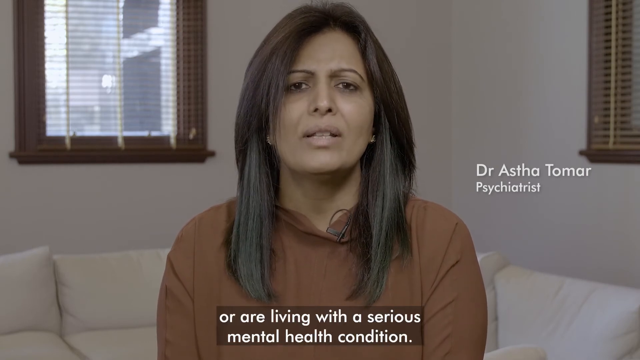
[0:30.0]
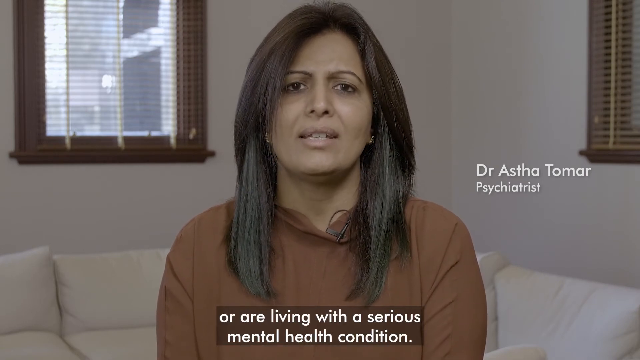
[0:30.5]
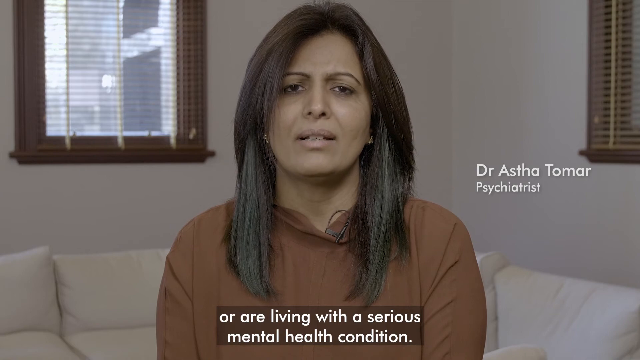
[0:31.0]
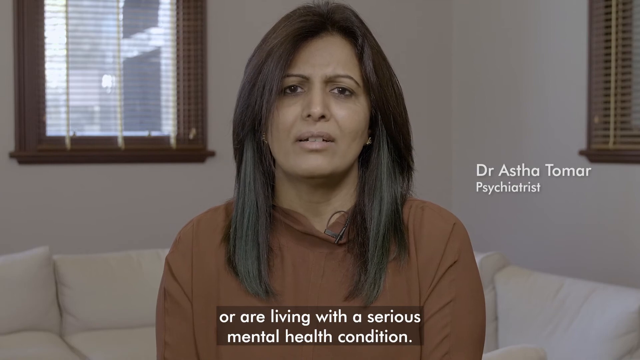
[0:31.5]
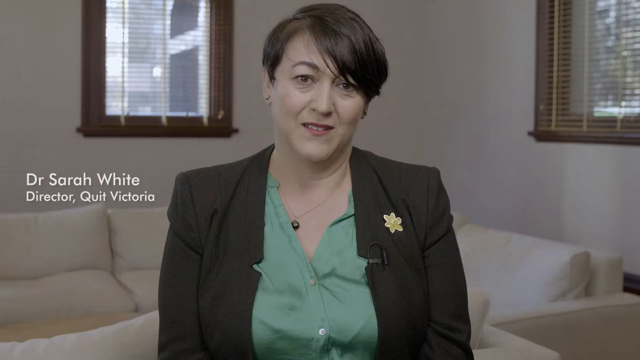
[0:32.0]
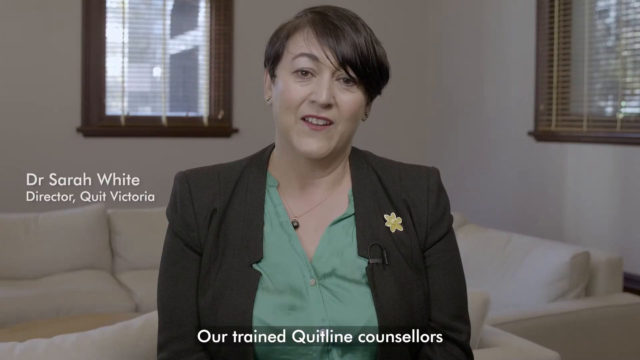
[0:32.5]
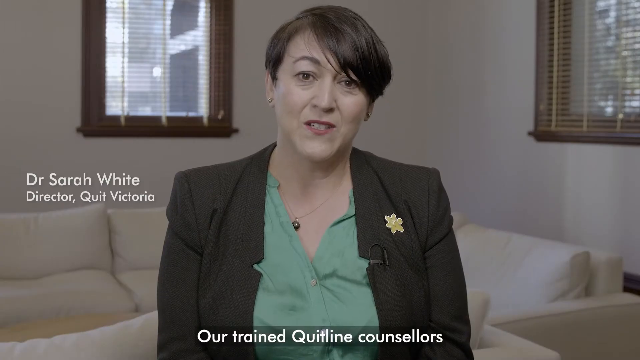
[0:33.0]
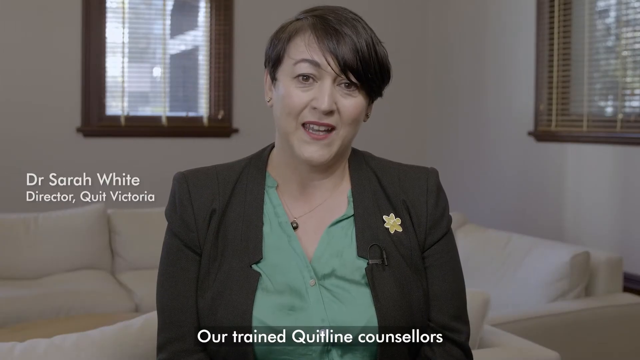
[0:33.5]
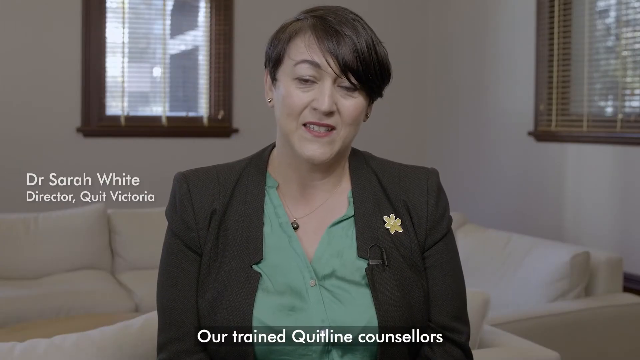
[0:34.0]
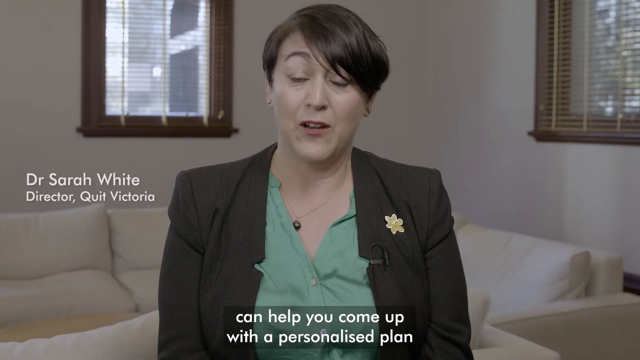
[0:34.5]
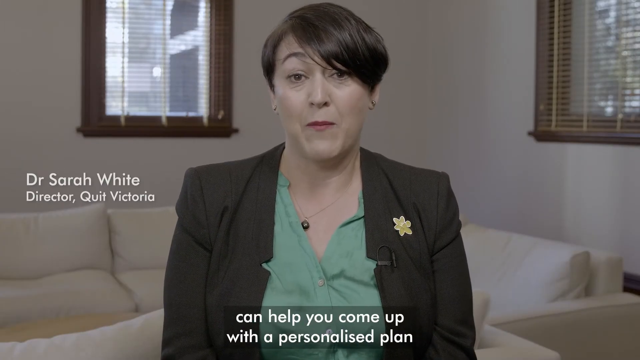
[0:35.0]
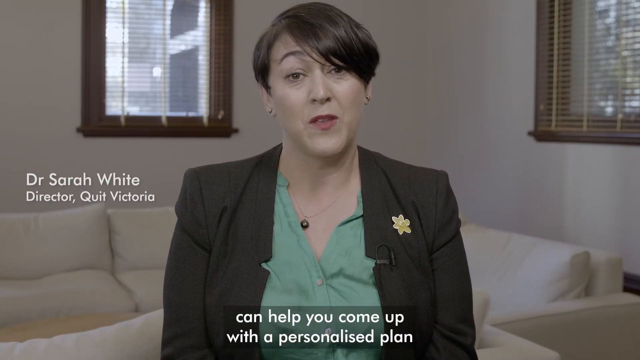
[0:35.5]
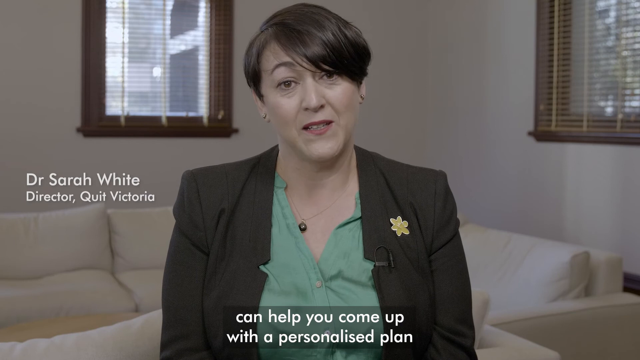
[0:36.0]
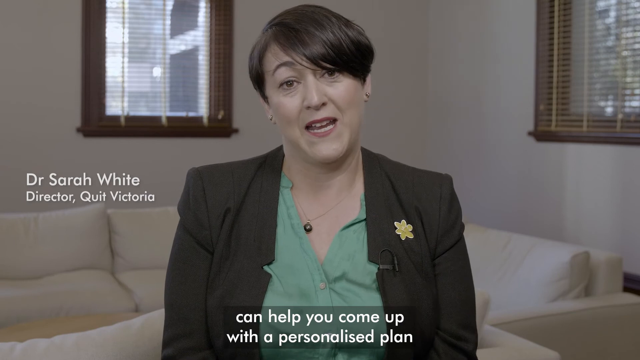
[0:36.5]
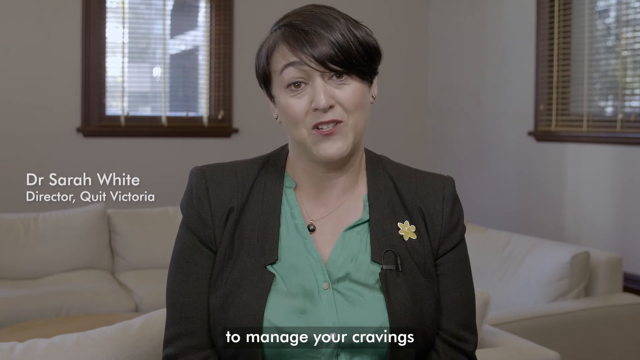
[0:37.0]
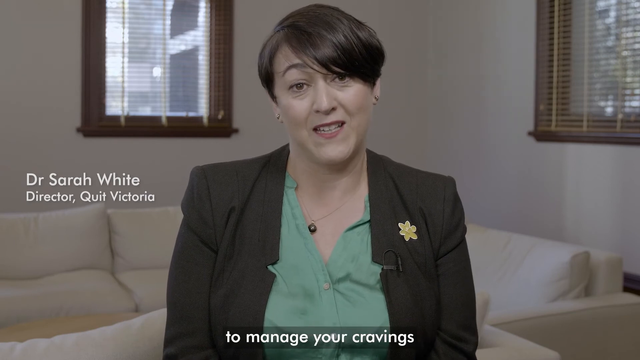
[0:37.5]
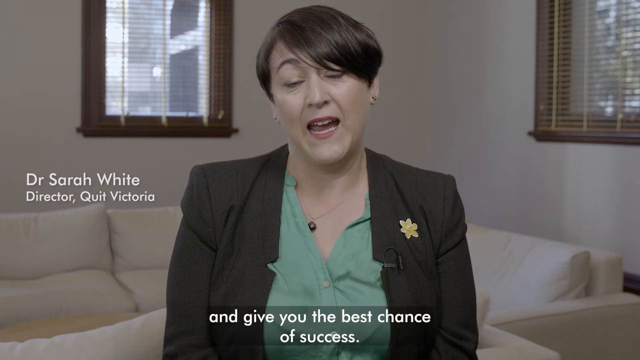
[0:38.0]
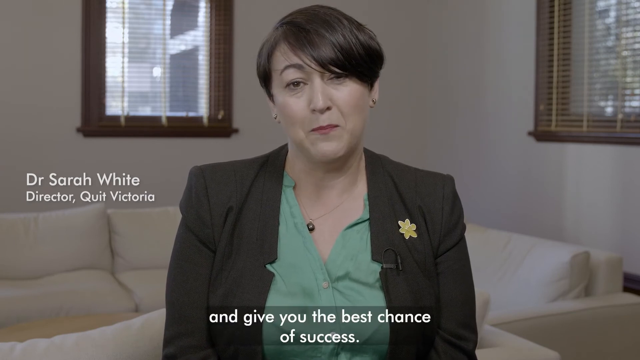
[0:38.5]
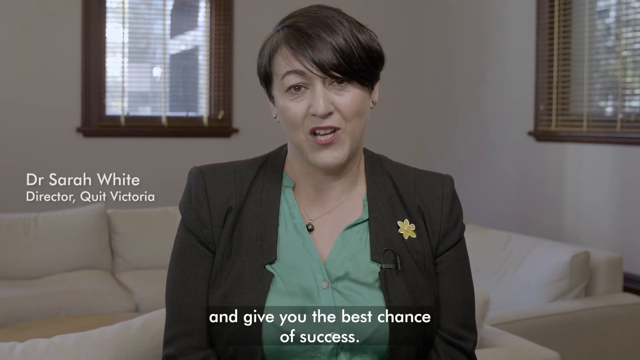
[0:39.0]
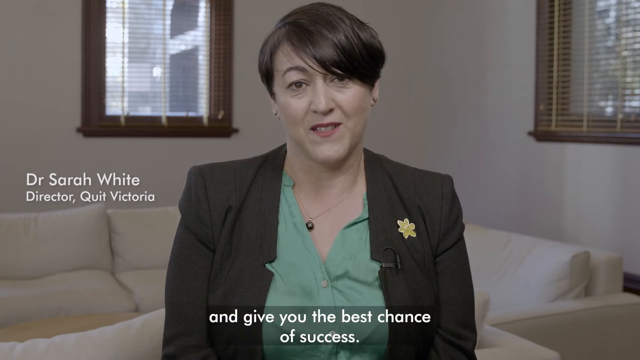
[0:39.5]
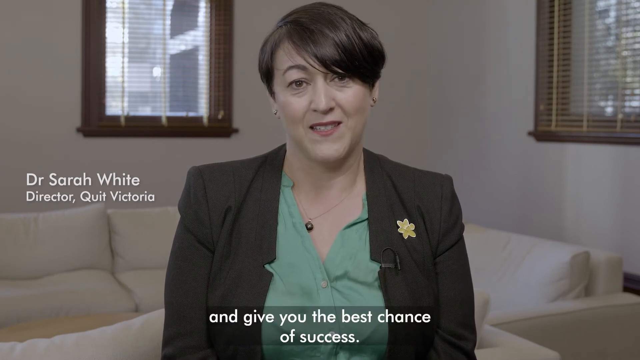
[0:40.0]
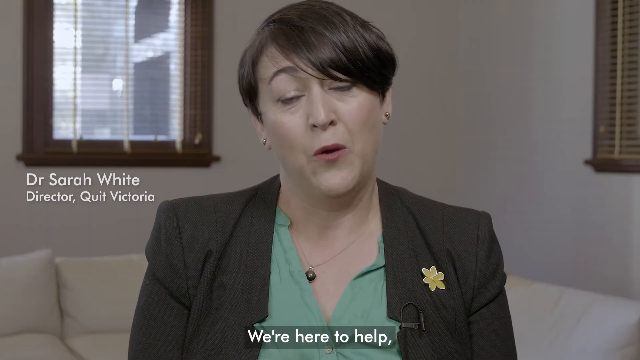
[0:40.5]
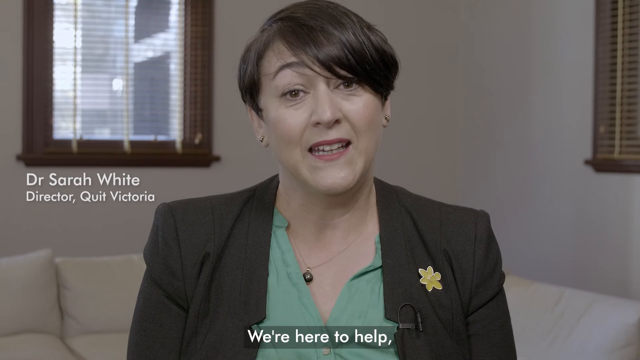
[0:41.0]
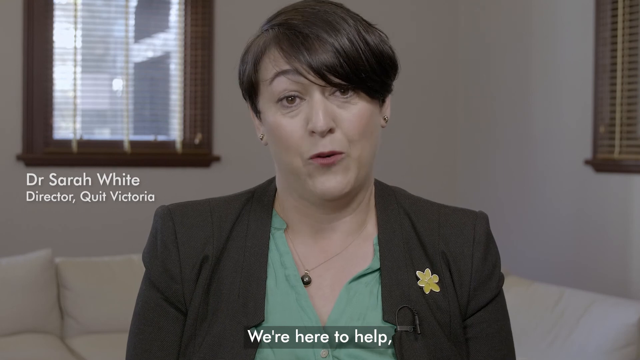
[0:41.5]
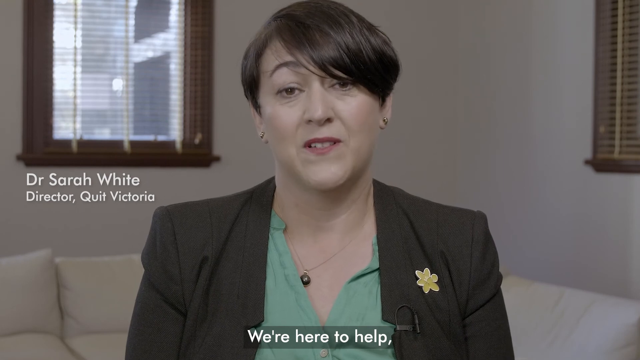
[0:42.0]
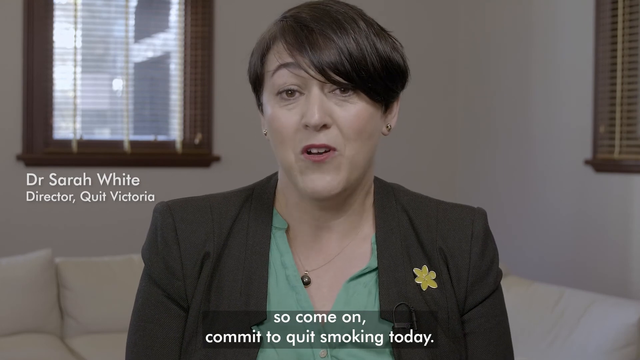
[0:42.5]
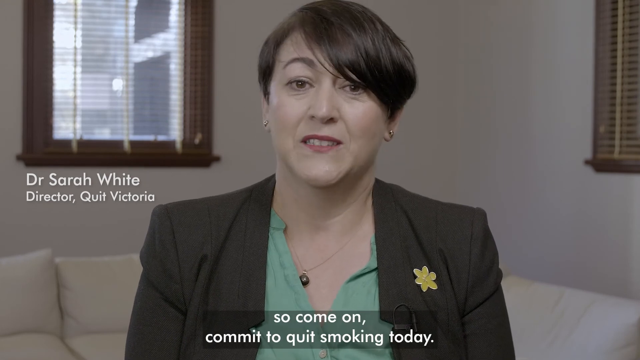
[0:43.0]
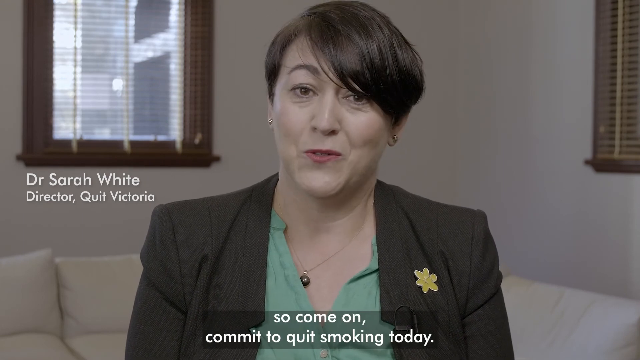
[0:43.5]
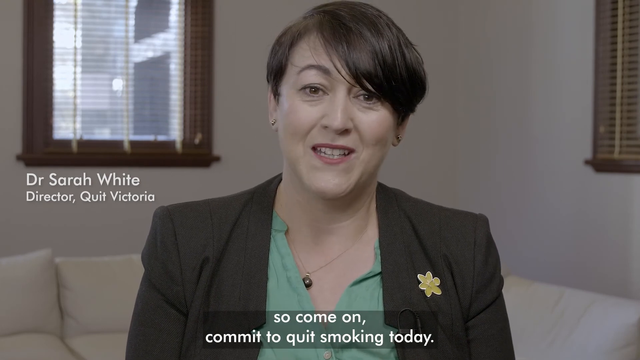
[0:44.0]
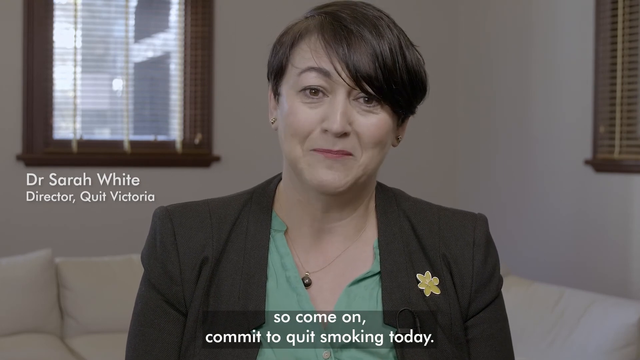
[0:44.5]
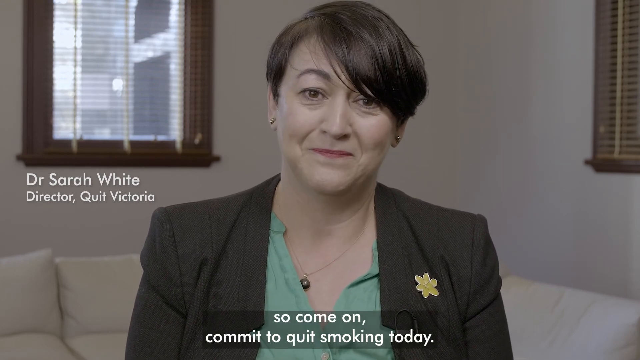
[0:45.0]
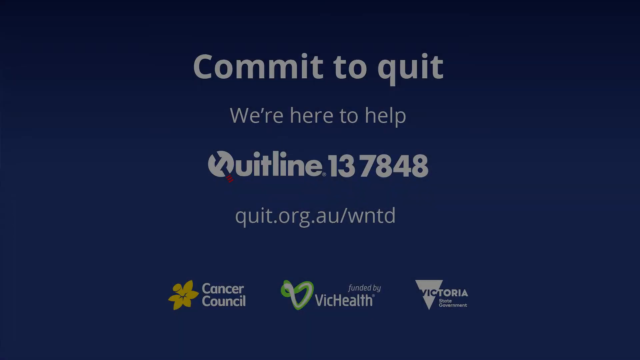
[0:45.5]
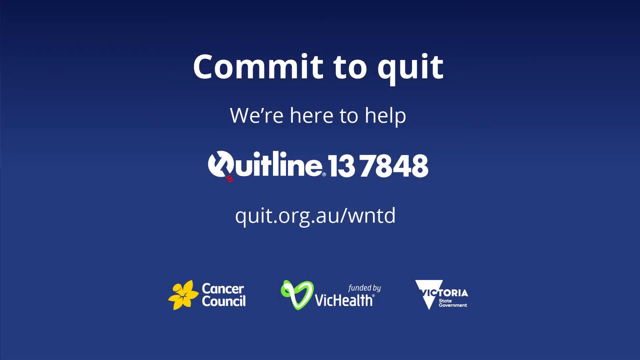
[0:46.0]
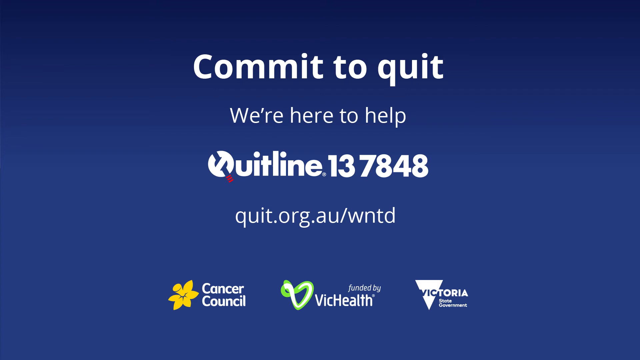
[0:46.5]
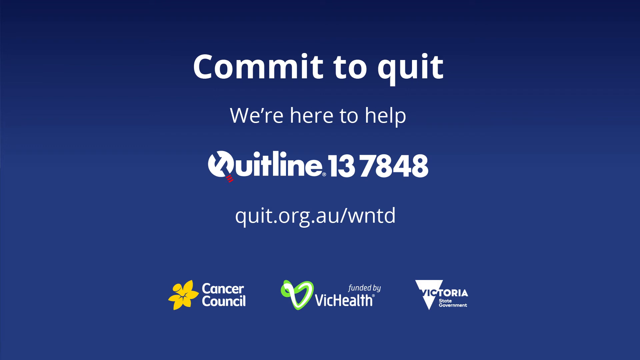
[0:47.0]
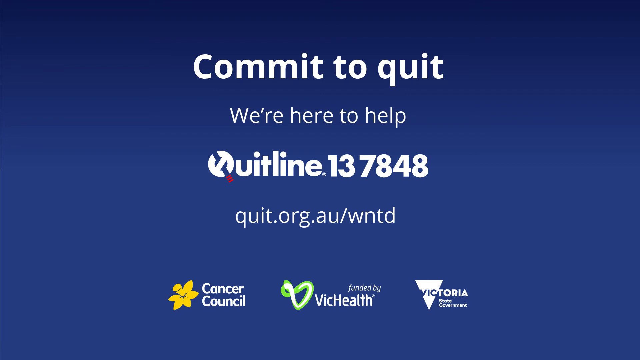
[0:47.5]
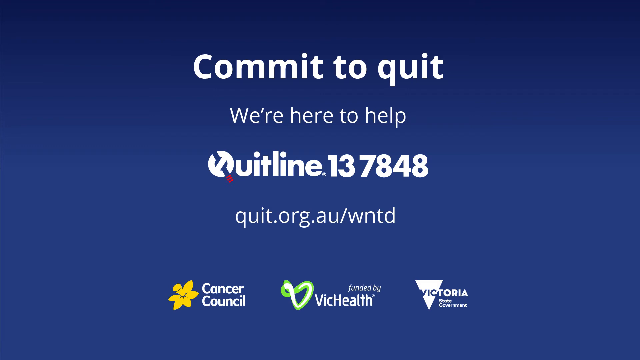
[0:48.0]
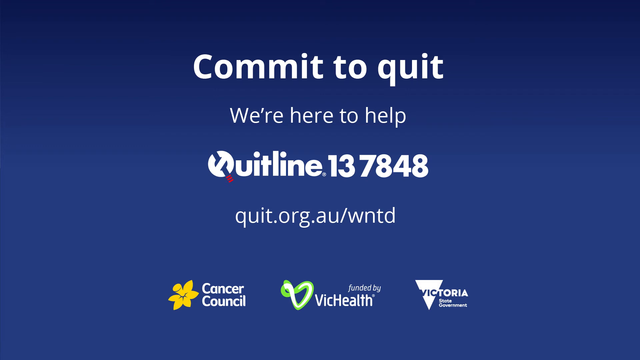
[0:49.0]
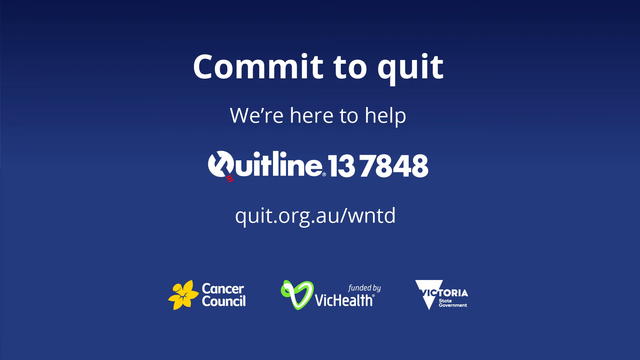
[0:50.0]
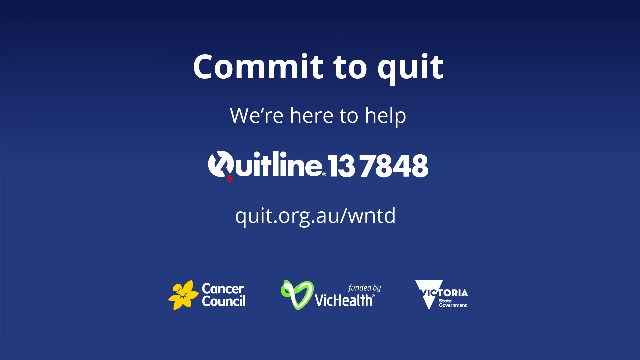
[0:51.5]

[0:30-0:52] A woman with dark hair and a brown shirt sits looking toward the viewer and speaking in an elegant, comfortable-looking room. White text to her right reads "Dr Astha Tomar" and beneath it "Psychiatrist." White captions at the bottom read "or are living with a serious mental health condition." The video switches to a woman sitting in a comfortable, elegant room; she has dark hair and wears a green shirt and a dark blazer with a yellow lapel. White text to the left gives her name, "Dr Sarah White," and beneath it "Director, Quit Victoria." As she speaks, captions at the bottom read "Our trained Quitline counselors can help you come up with a personalized plan to manage your cravings and give you the best chance of success. We're here to help so c'mon, commit to quitting to smoking today." The video then switches to text on a blue background reading "Commit to quit," beneath it "We're here to help," then "Quitline 13 7848," then "quit.org.au/wntd." At the end of the video there are logos for Cancer Council, VicHealth and one more logo on the lower right.